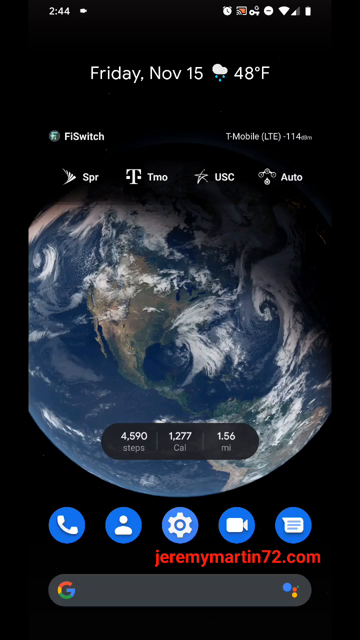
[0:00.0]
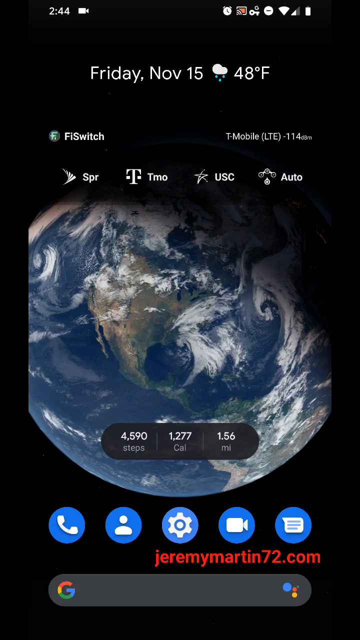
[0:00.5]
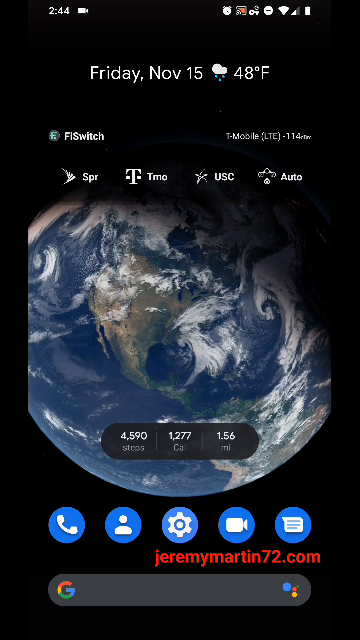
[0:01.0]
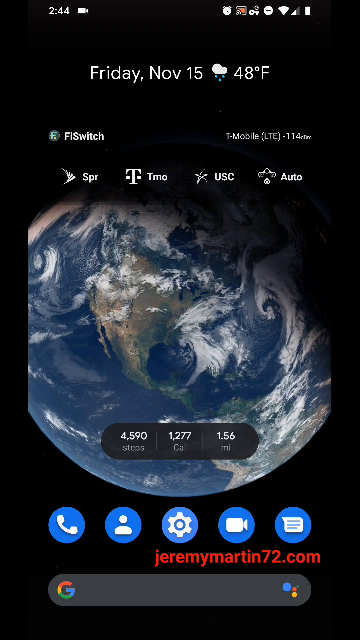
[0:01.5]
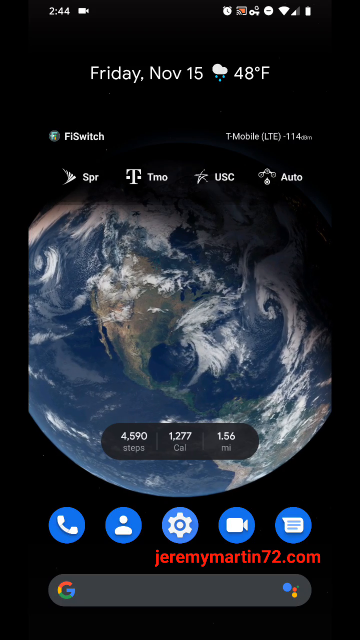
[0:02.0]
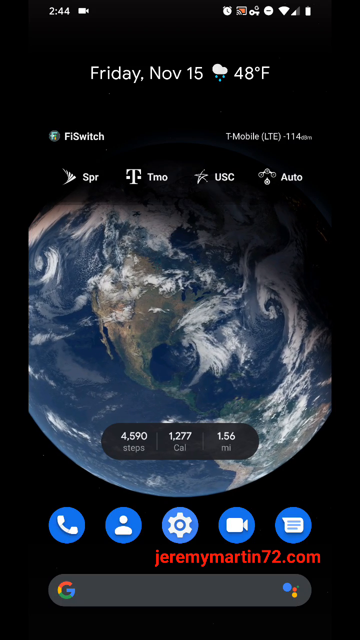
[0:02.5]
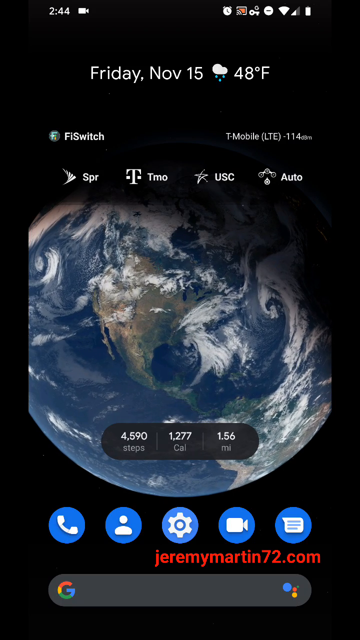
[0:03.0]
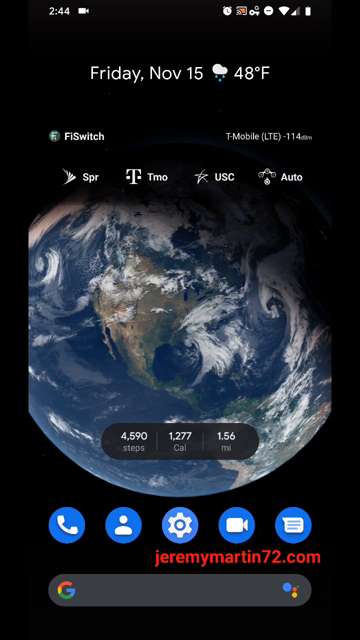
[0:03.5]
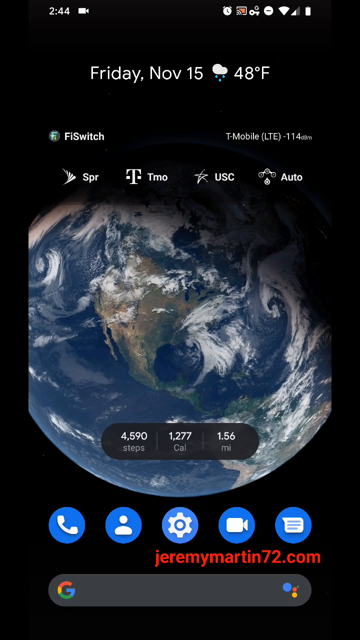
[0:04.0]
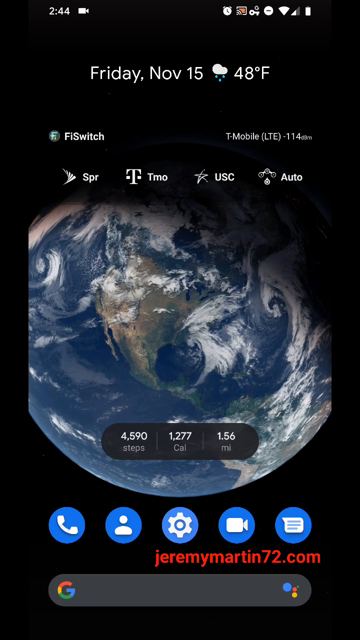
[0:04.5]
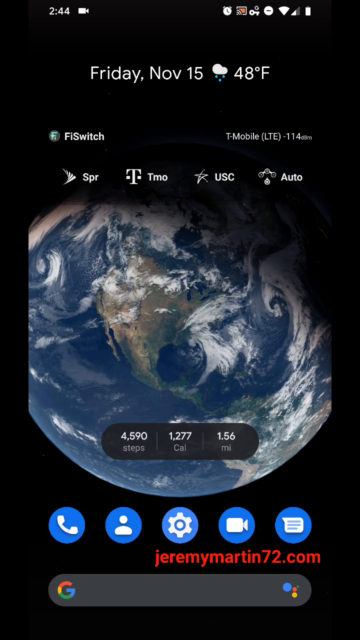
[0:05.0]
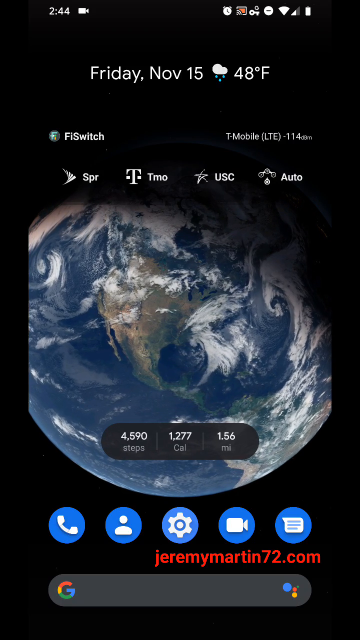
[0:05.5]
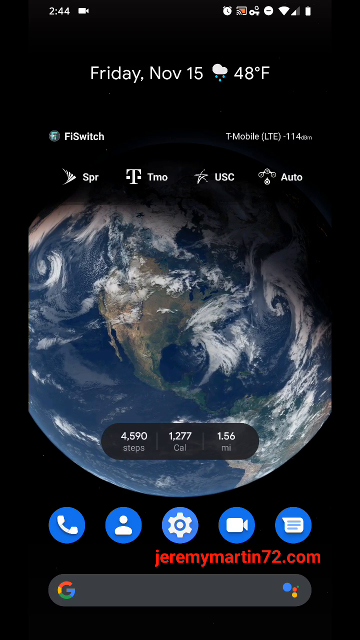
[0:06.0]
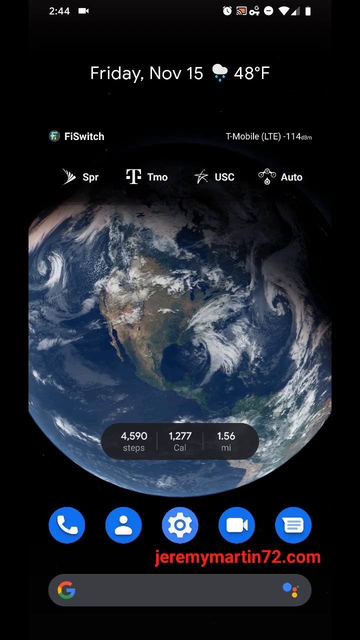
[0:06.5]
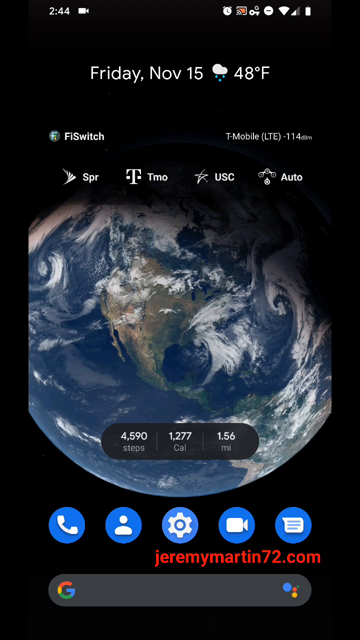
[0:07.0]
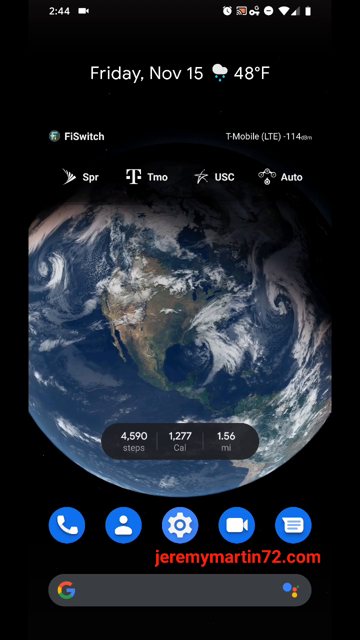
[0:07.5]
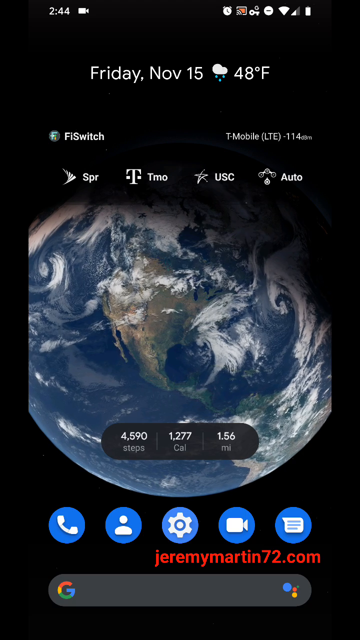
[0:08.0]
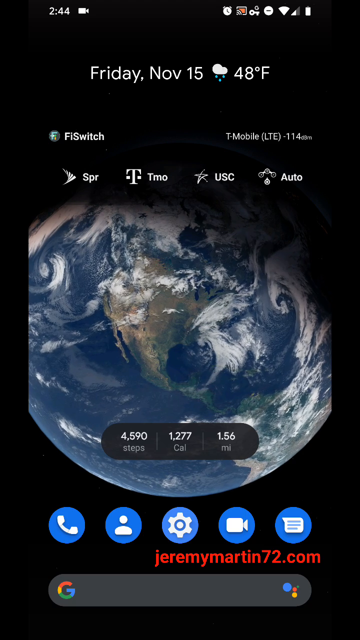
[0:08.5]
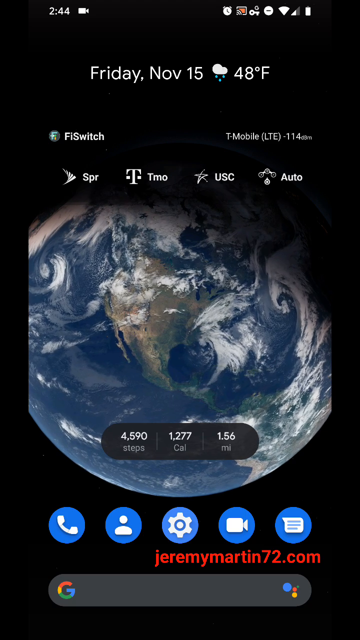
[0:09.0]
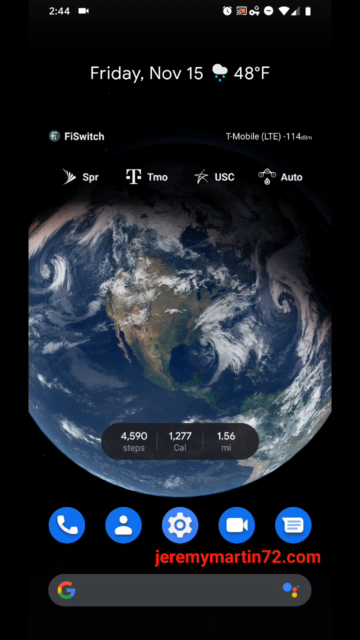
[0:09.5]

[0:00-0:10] A mobile device screen shows the time in the upper left corner, and on the top right there are an alarm symbol, the Wi-Fi symbol, the cell signal, the battery charge status and a few more symbols that cannot be made out. Below that, at the top center of the screen, white text reads "Friday, November 15th", with a rainy weather icon showing a cloud and rain and 48 degrees Fahrenheit. The background is completely black with a picture of the earth in the center. Below that are some icons for the phone and a website reading "JeremyMartin72.com". At the bottom there are some Google symbols with a Google search bar.